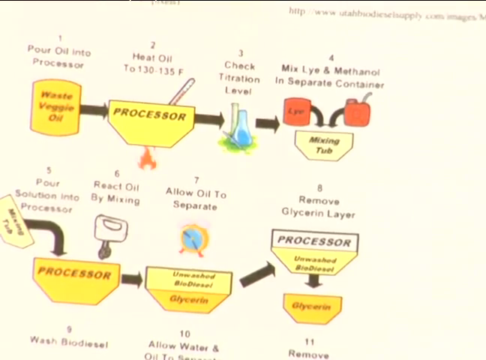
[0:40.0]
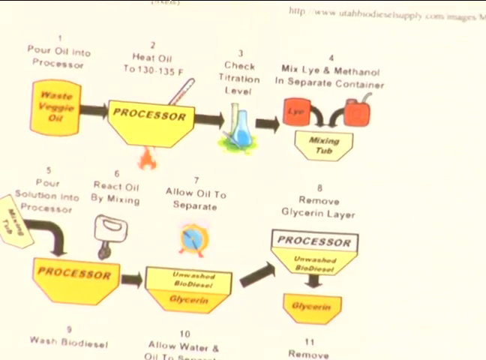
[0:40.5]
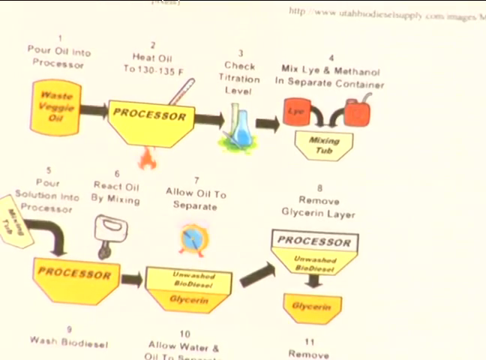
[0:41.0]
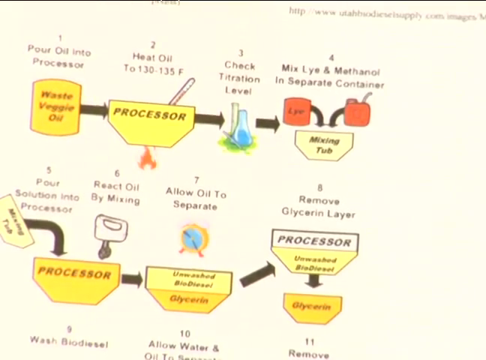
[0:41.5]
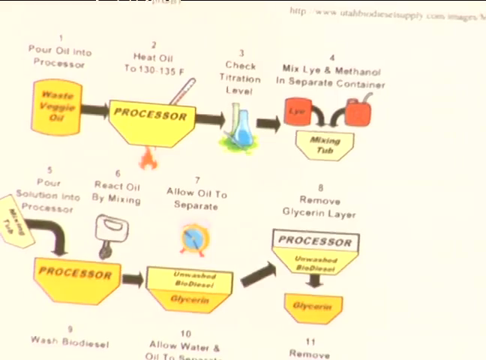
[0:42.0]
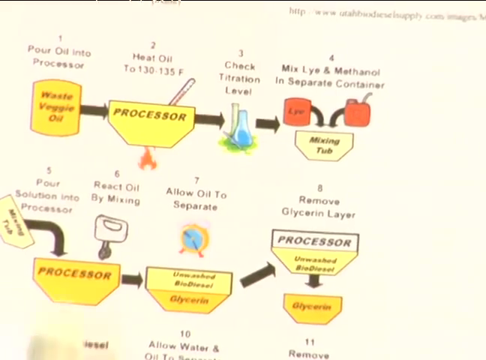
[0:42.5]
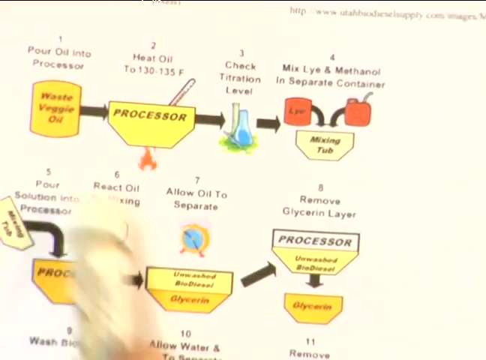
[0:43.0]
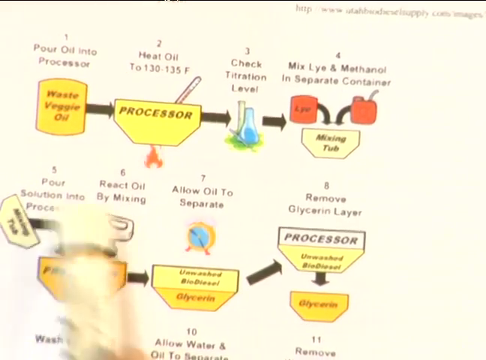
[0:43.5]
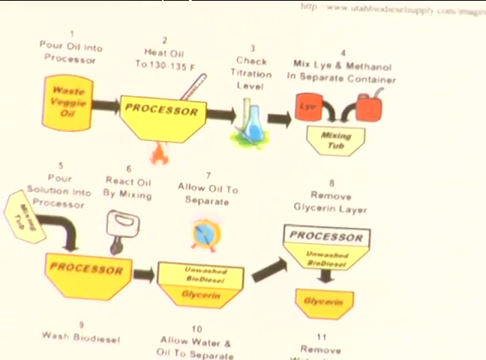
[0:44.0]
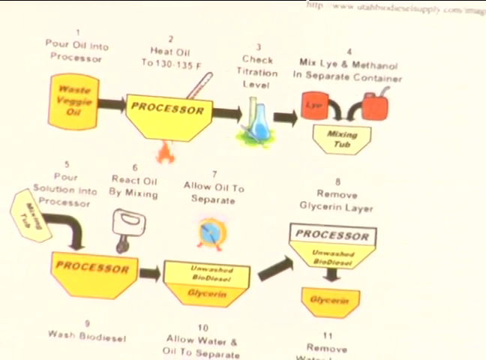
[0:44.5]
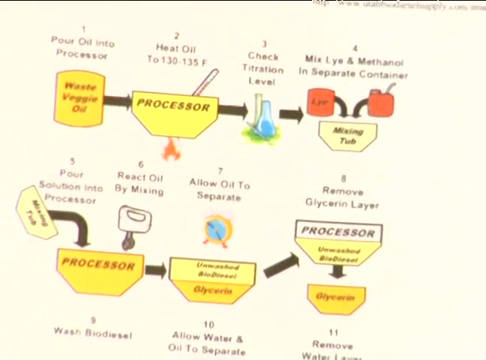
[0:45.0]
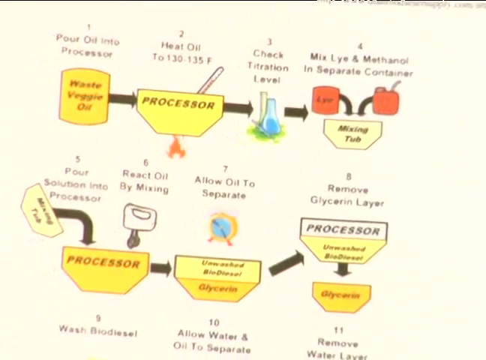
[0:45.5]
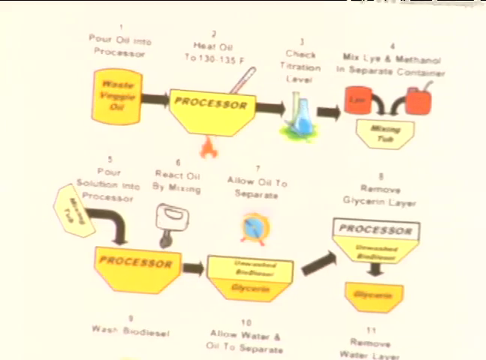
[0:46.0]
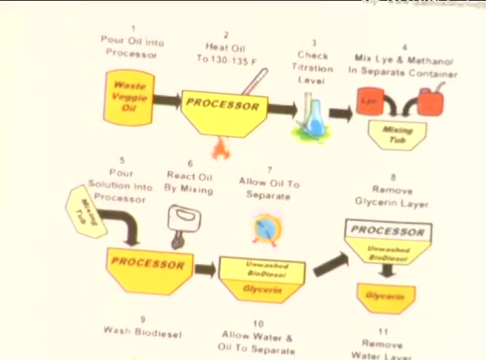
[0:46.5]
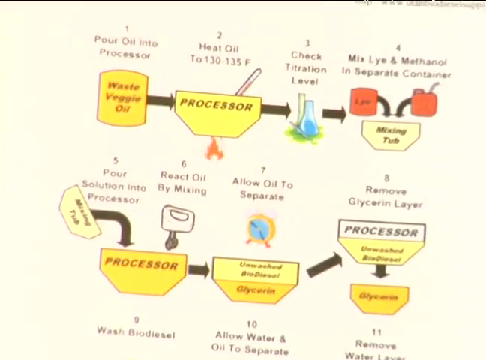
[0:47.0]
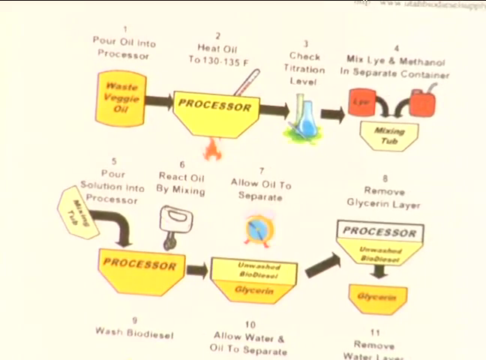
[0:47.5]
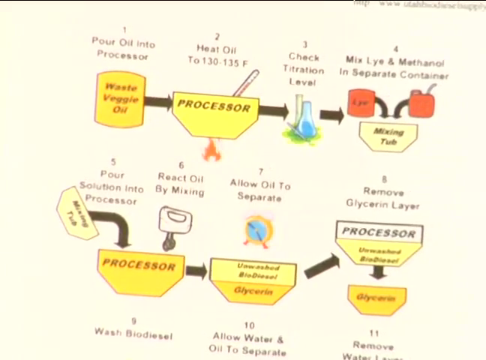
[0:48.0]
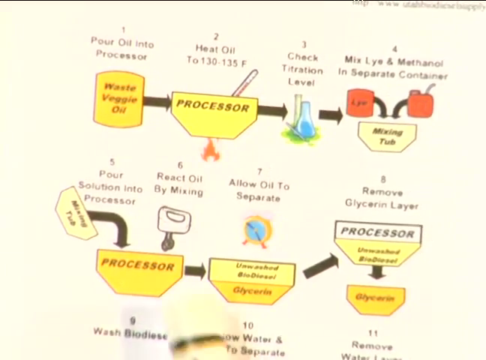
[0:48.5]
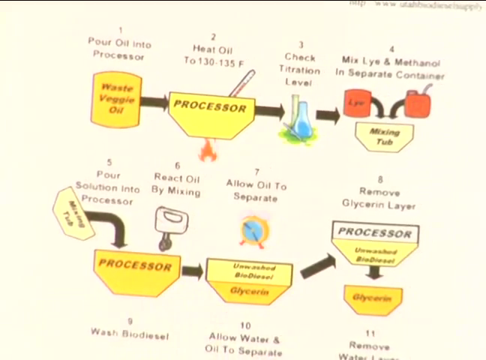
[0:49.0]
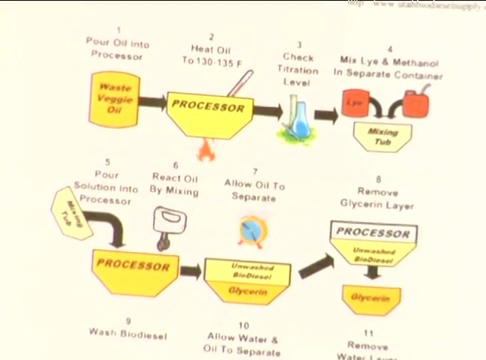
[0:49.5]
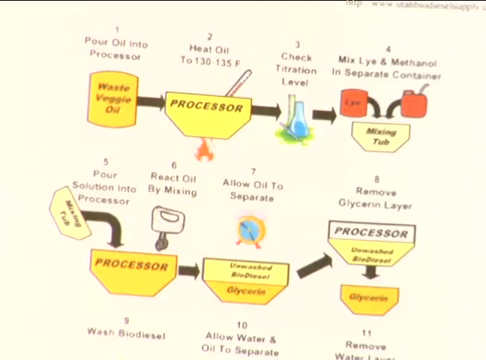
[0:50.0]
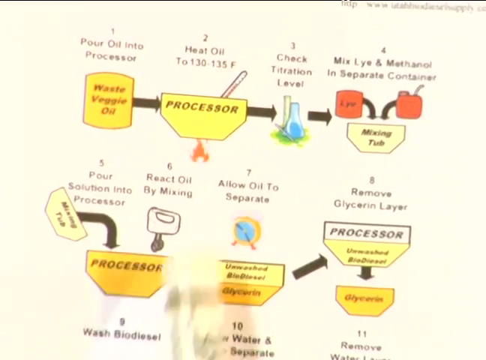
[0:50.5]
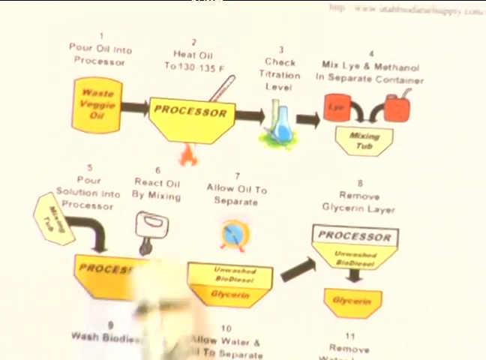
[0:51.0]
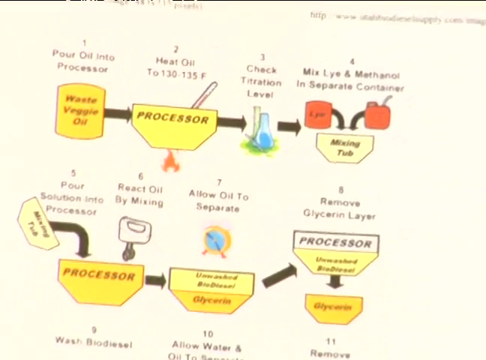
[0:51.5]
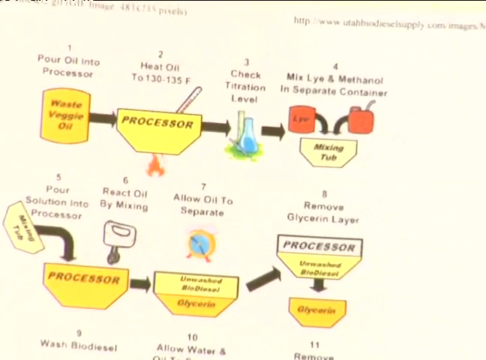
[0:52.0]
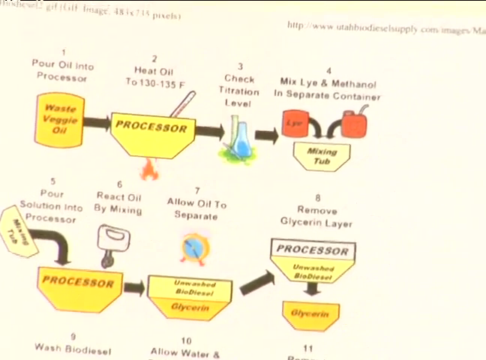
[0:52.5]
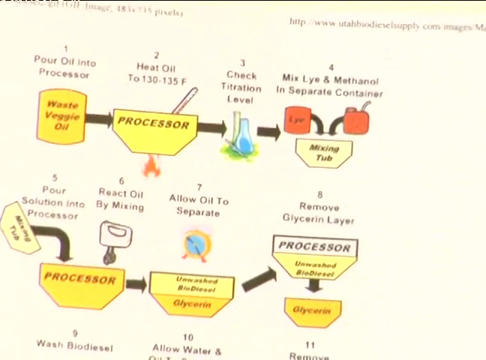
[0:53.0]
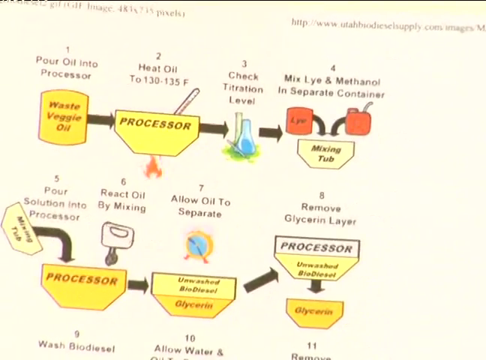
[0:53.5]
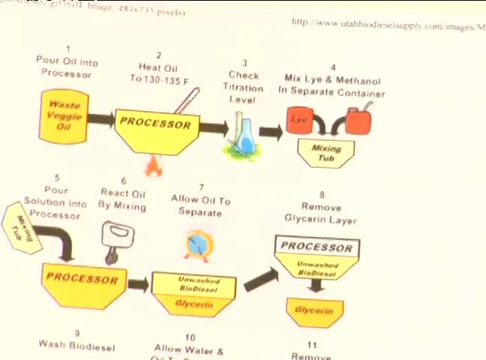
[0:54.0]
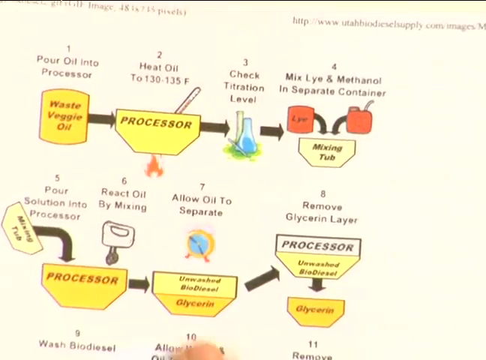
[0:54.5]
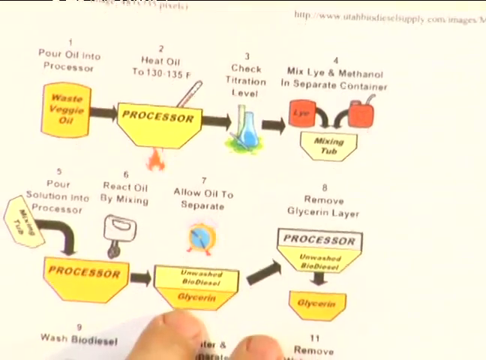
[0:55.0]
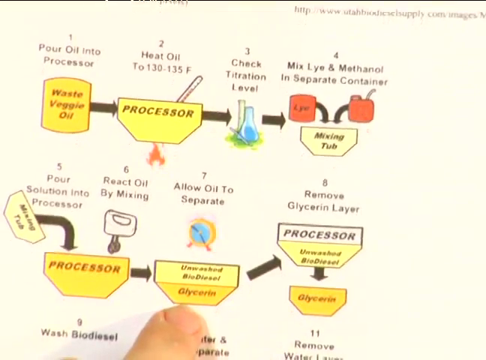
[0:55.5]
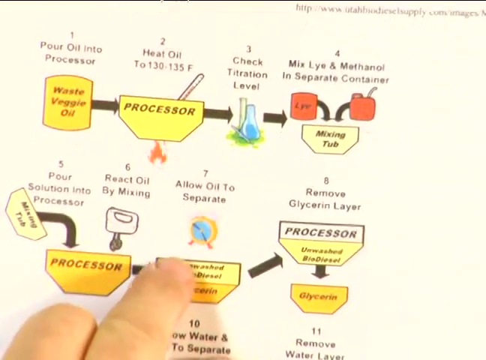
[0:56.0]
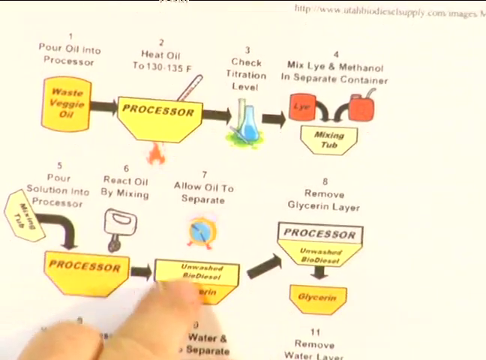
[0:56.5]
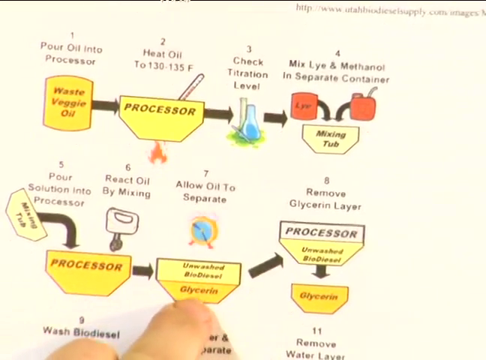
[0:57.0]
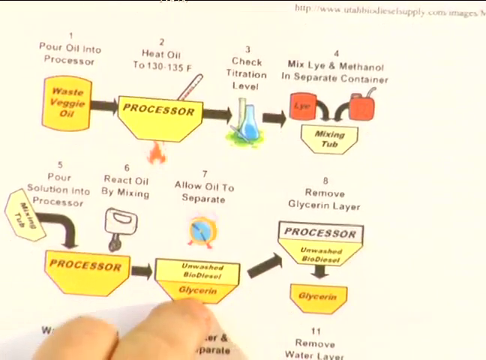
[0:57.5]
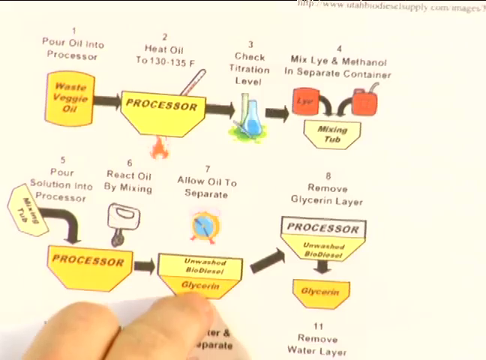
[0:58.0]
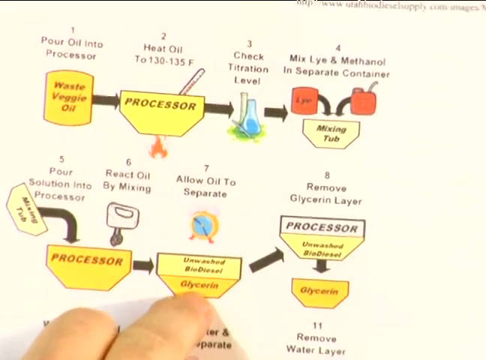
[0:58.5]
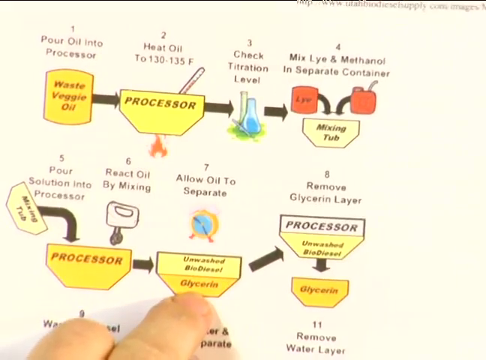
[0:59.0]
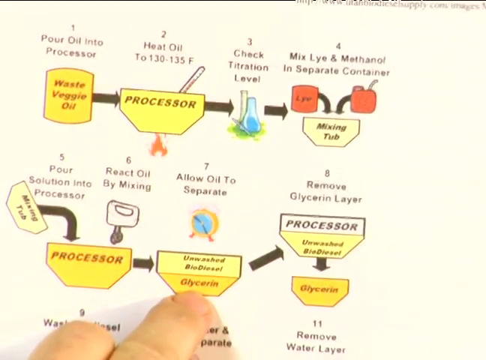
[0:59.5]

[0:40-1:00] A close-up of the instructions shows an illustration and a step-by-step process, with arrows showing the direction of the process: step one, "pour oil in the processor"; step two, "heat oil"; step three, "check filtration level"; 4, "mix lye and methanol in a separate container"; 5, "pour solution in the processor"; 6, "react oil by mixing"; 7, "allow oil to separate"; 8, "remove glycerin layer". The experimenter seems to point at the processor part of the instructions and seems to pay special attention to it. They then point at the section that says "allow oil to separate", step number seven.